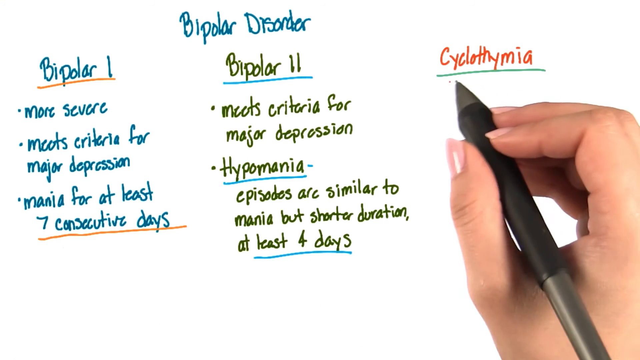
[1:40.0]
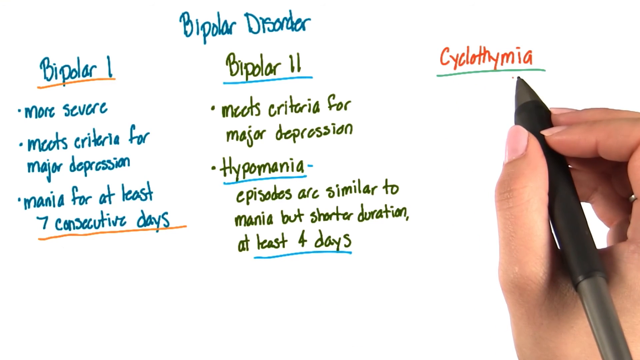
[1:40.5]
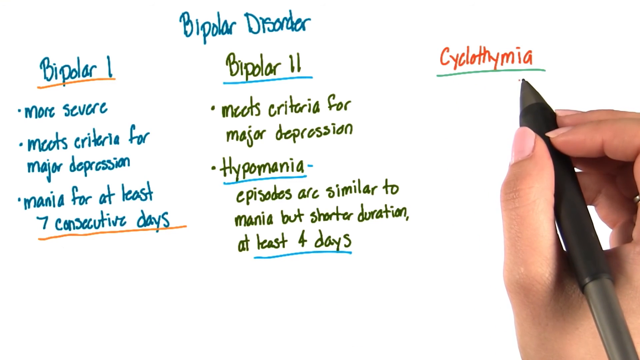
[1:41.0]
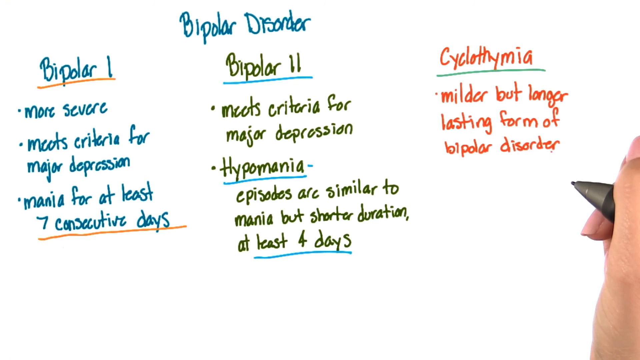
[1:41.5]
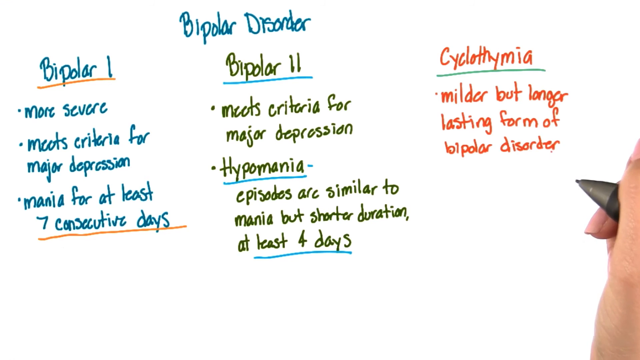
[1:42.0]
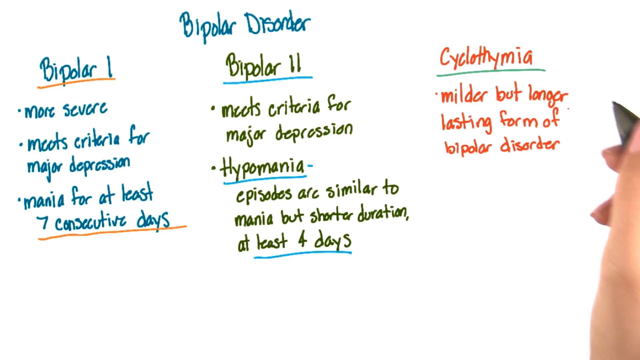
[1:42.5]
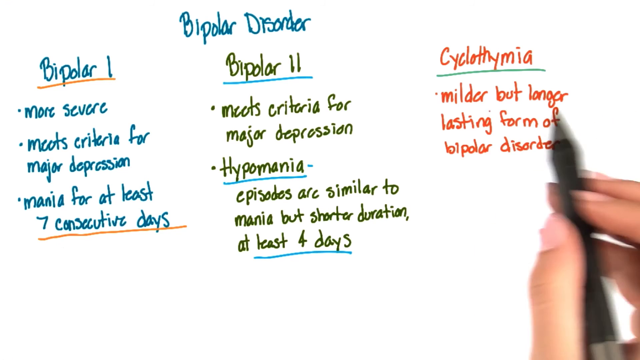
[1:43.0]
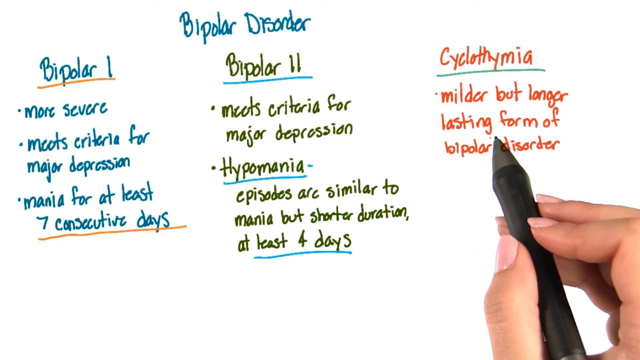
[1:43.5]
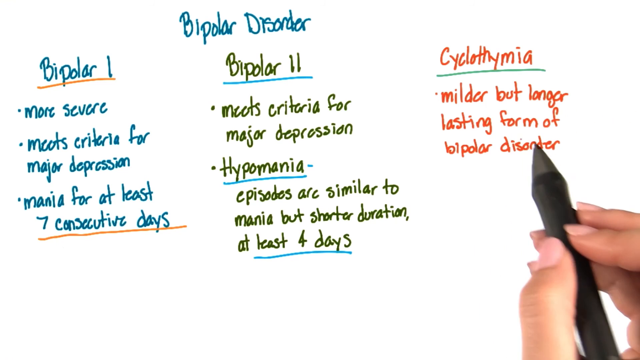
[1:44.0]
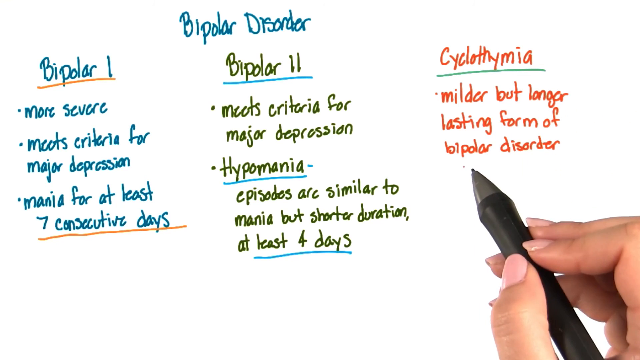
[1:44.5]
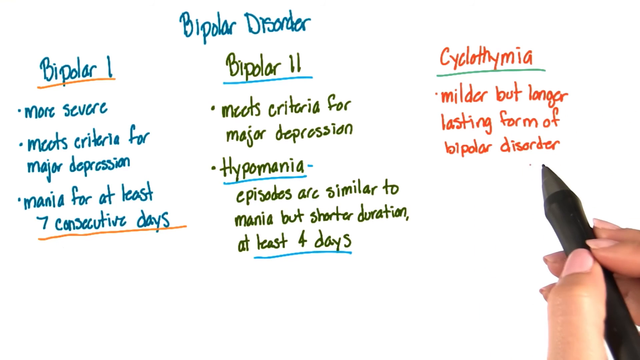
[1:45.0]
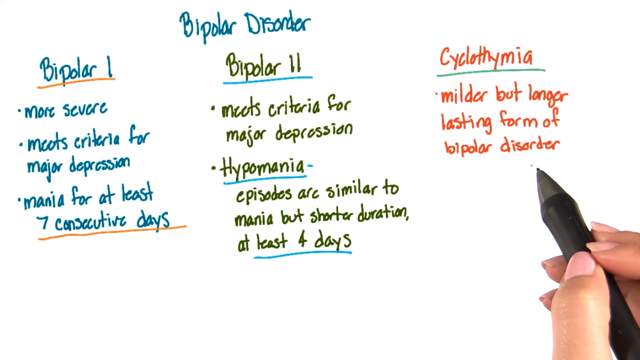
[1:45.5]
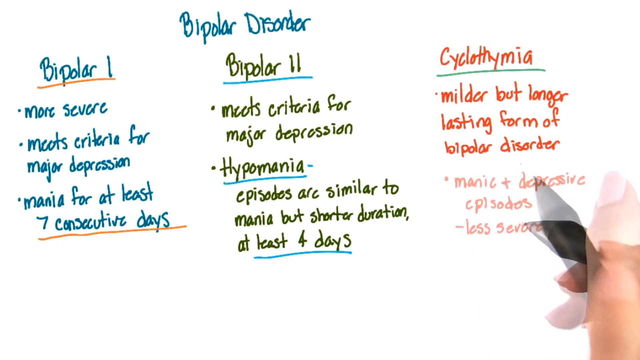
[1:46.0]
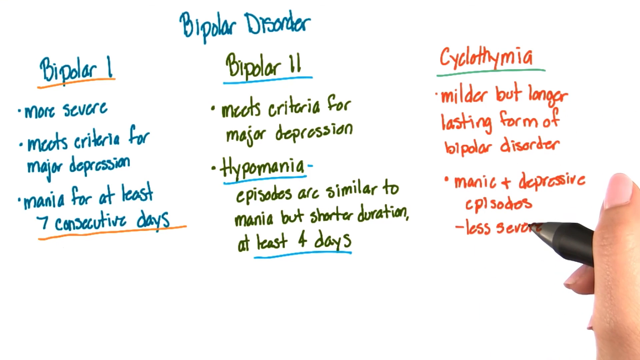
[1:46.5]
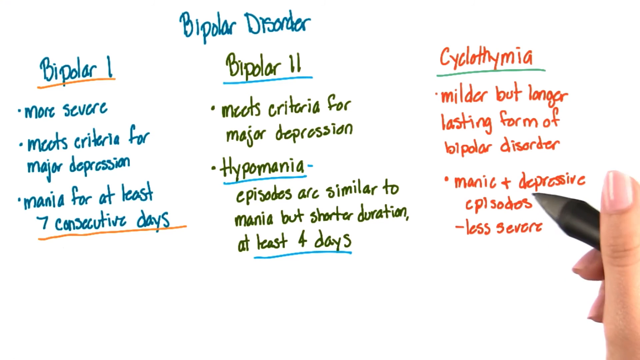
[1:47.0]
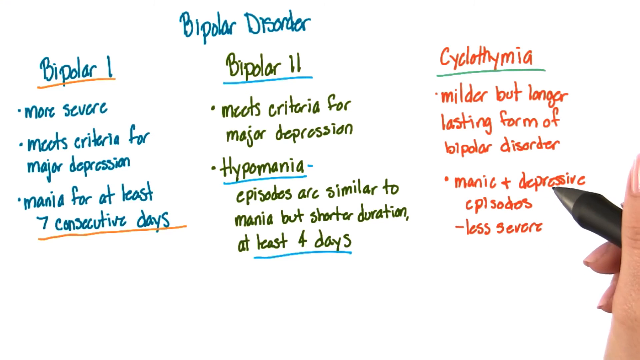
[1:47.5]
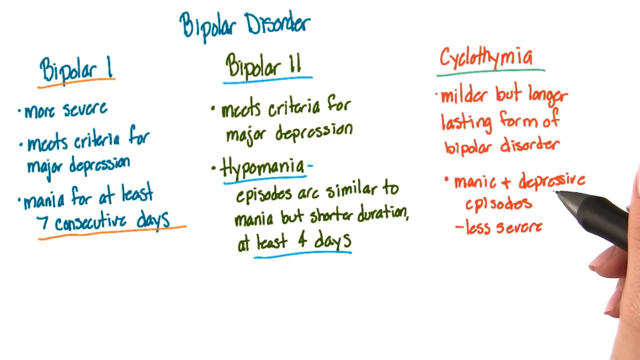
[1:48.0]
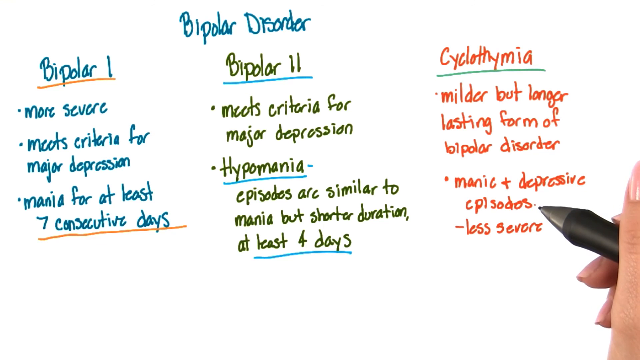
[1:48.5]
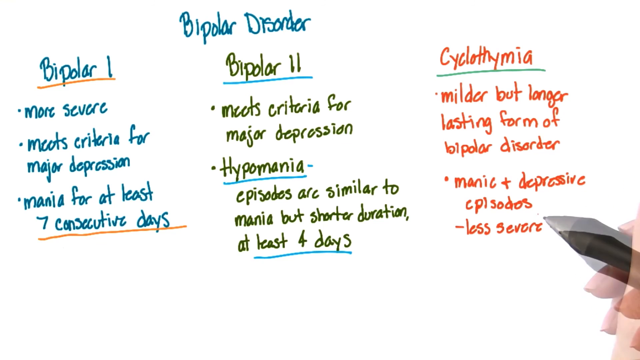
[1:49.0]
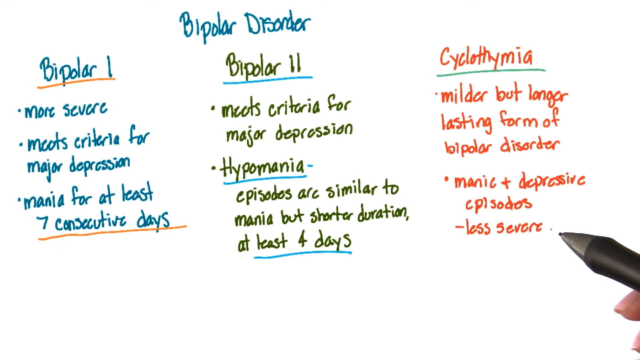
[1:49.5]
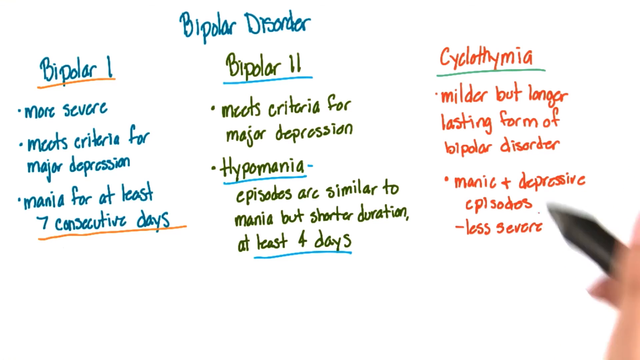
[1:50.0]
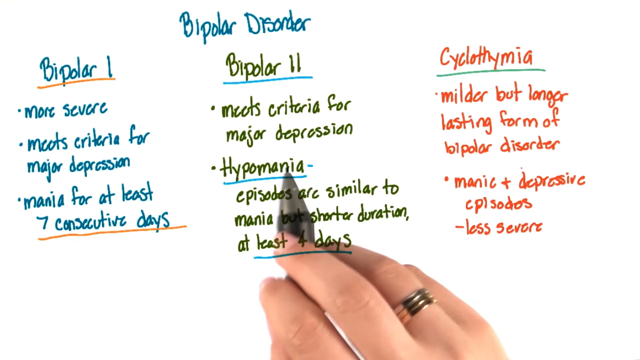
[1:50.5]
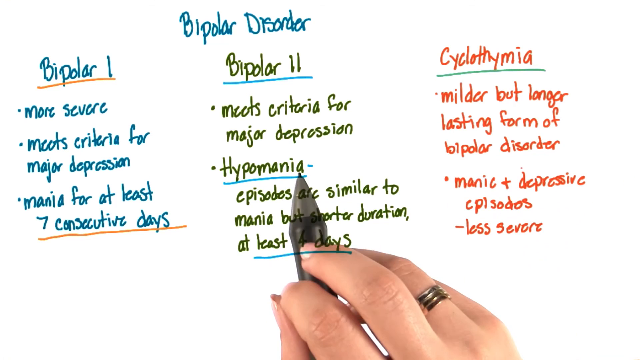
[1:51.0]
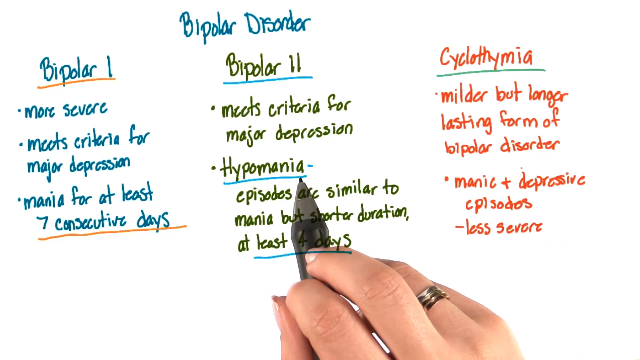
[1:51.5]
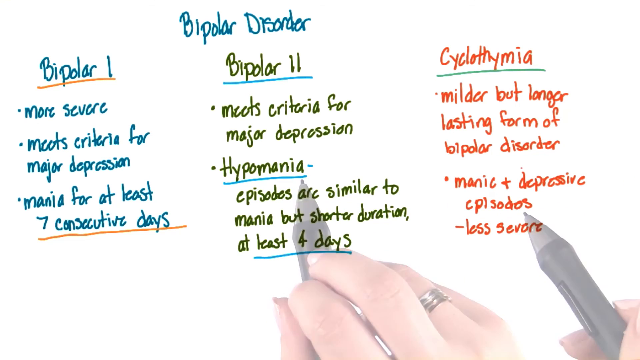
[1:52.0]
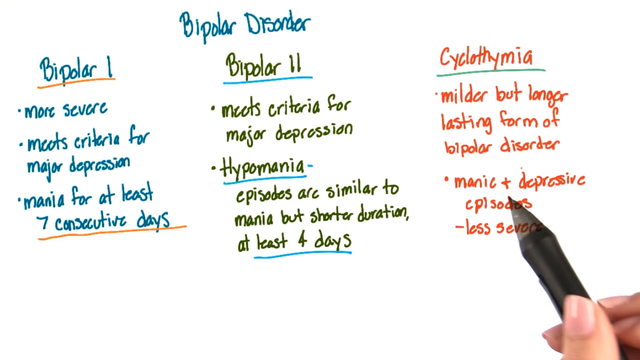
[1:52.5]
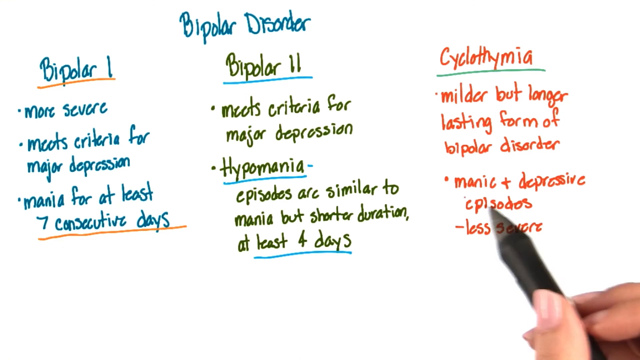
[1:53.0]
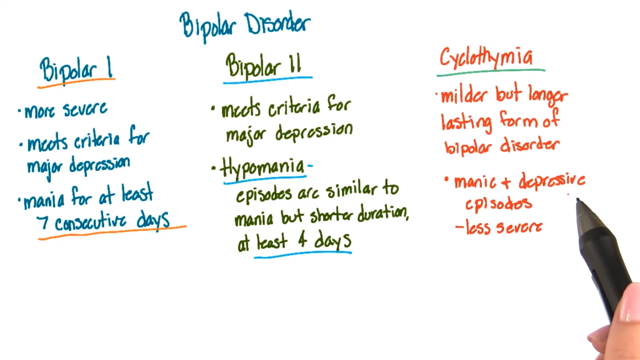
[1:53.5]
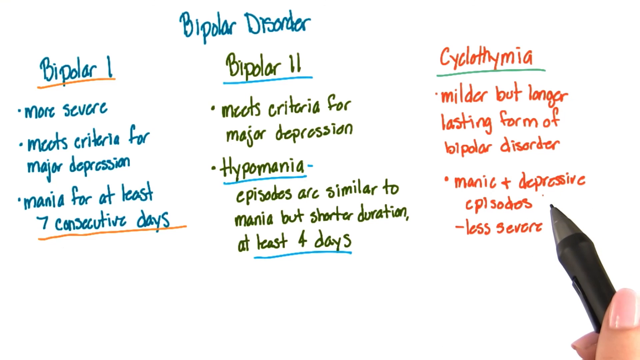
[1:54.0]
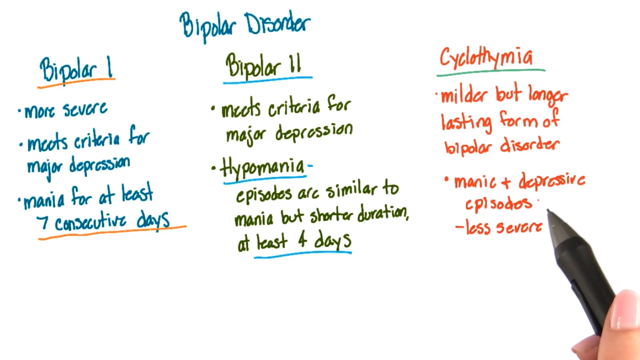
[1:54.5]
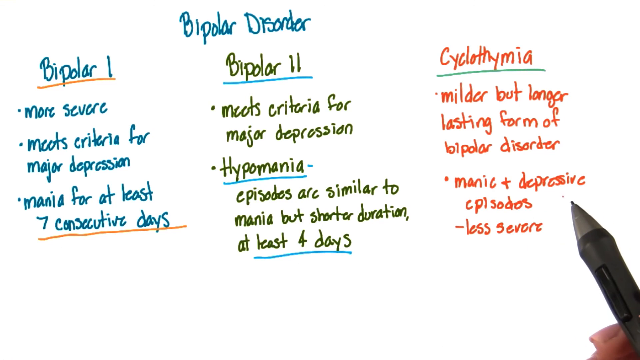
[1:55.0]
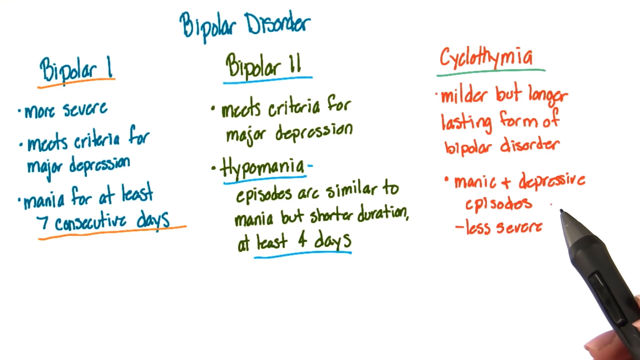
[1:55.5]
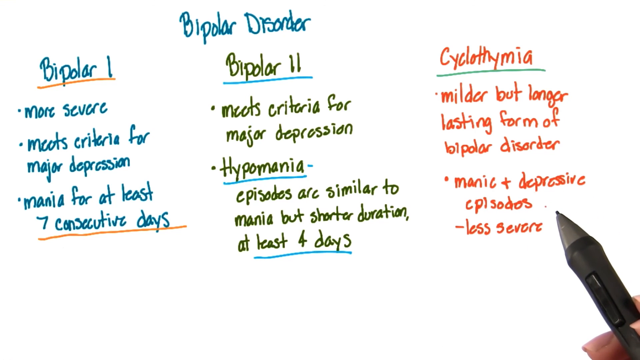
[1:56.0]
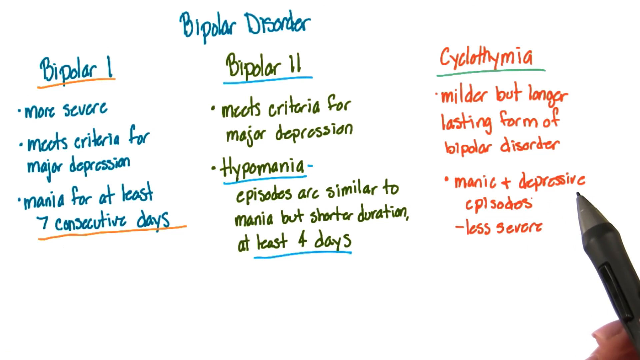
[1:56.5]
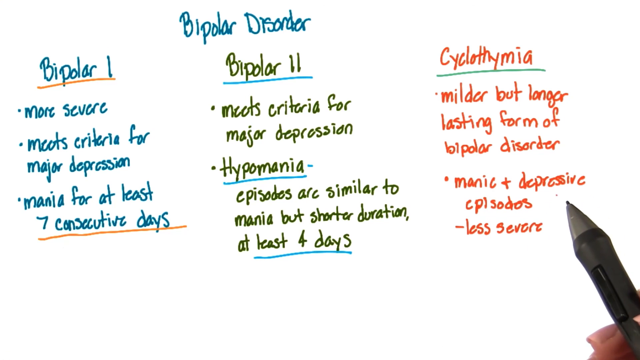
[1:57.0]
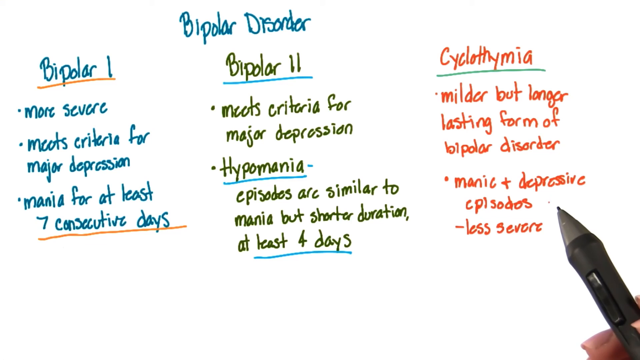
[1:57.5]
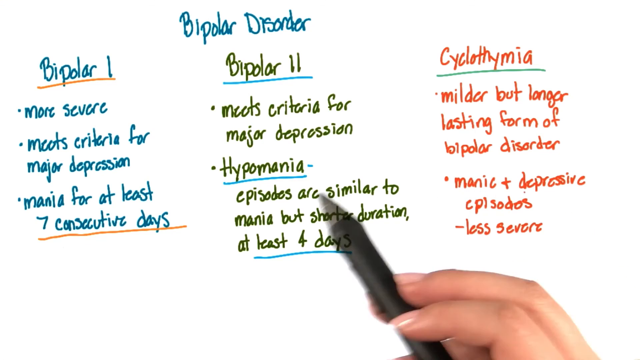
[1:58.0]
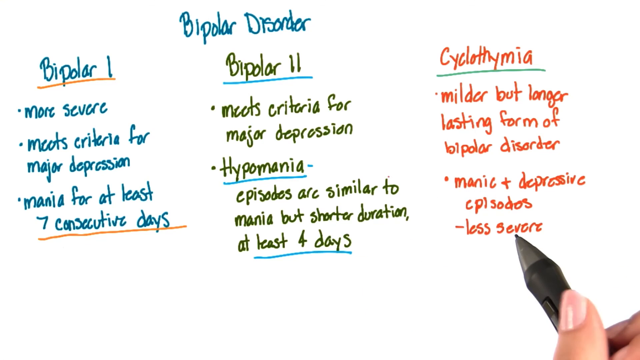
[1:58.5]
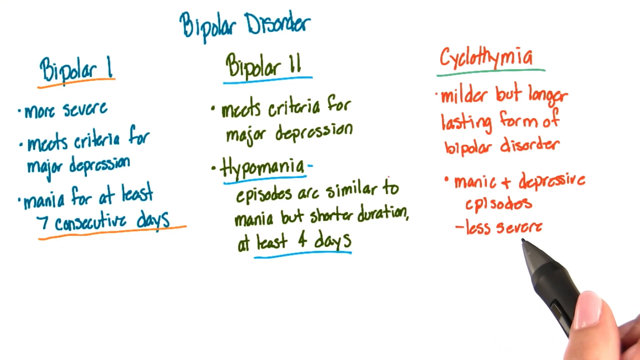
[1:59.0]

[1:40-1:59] Someone uses a digital pen to write on a white background, gripping it with the right hand, which comes from the bottom right corner of the frame. The text so far reads "Bipolar Disorder" with three separate columns. The first column reads "Bipolar 1, more severe, meets criteria for major depression, mania for at least 7 consecutive days." The second reads "Bipolar 2, meets criteria for major depression, hypomania, episodes are similar to mania but shorter duration at least 4 days." The person is in the process of writing the third column, titled "Cyclothymia". They underline "Cyclothymia", and a first bullet point appears underneath reading "milder but longer lasting form of bipolar disorder". The pen points at the top line, "milder but longer", and taps various words of the description. New text appears reading "manic plus depressive episodes, less severe". The pen points at the word "depressive" and then at "less severe", then at "hypomania" in the second column, and then moves back to the text under "Cyclothymia".